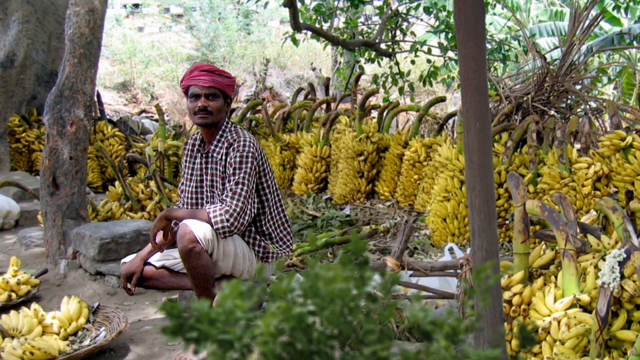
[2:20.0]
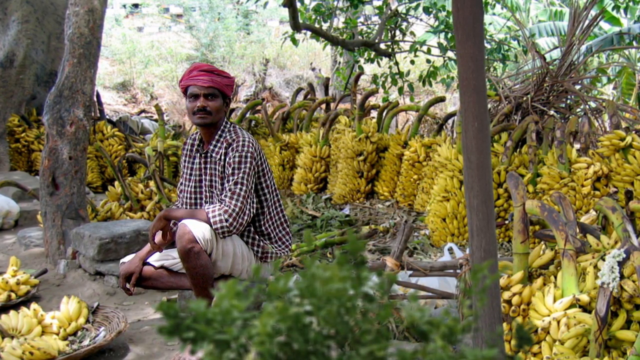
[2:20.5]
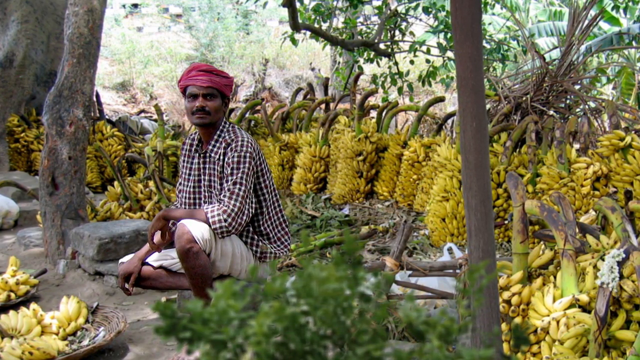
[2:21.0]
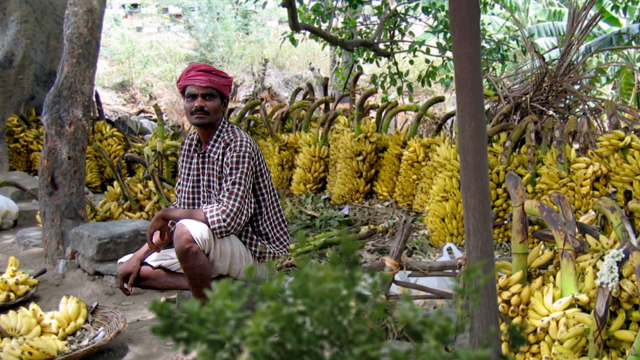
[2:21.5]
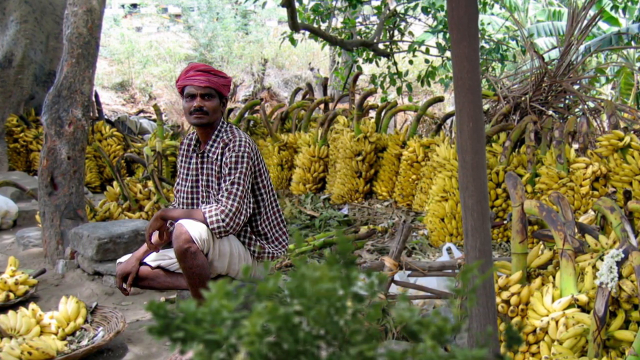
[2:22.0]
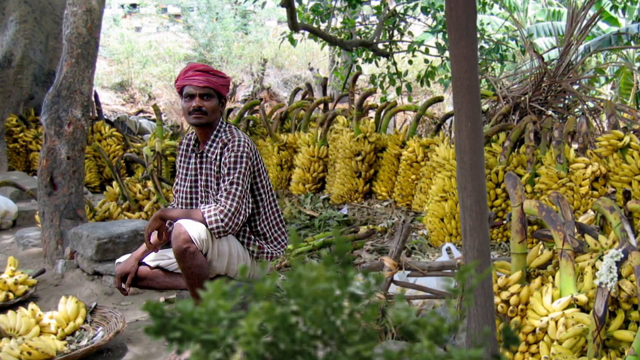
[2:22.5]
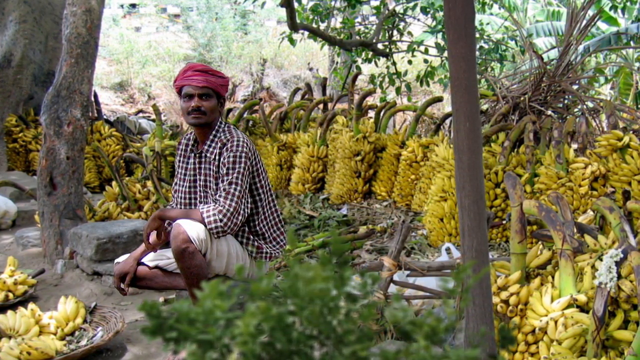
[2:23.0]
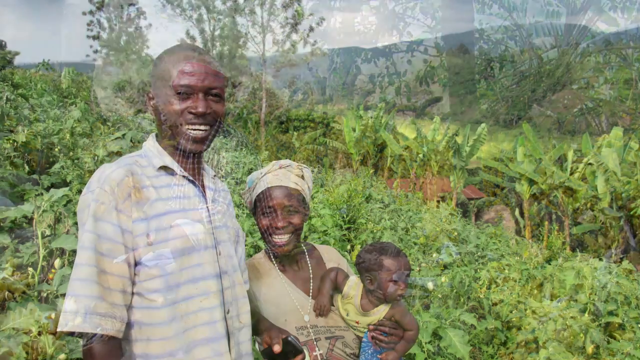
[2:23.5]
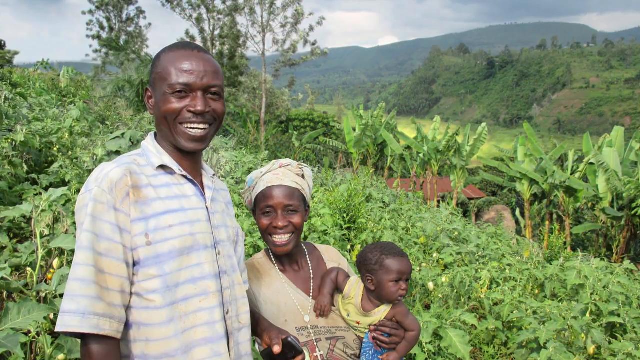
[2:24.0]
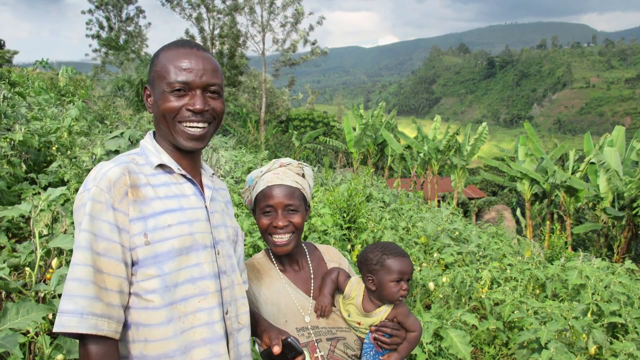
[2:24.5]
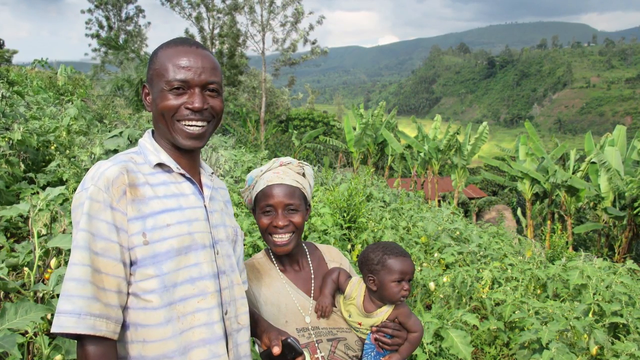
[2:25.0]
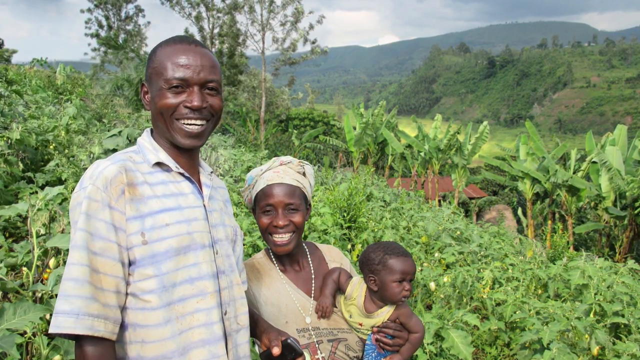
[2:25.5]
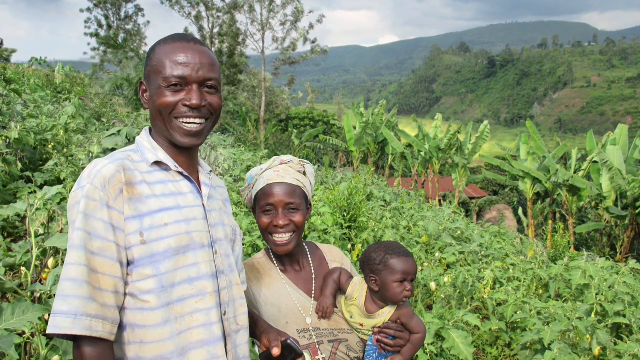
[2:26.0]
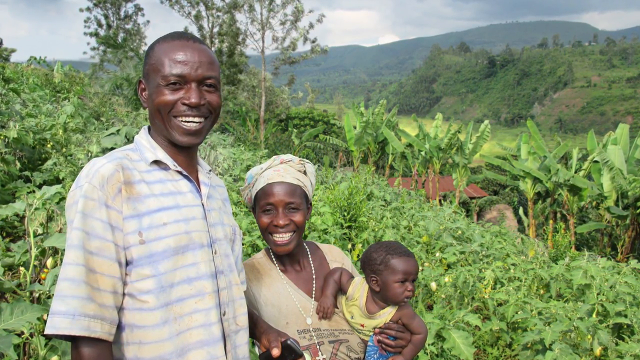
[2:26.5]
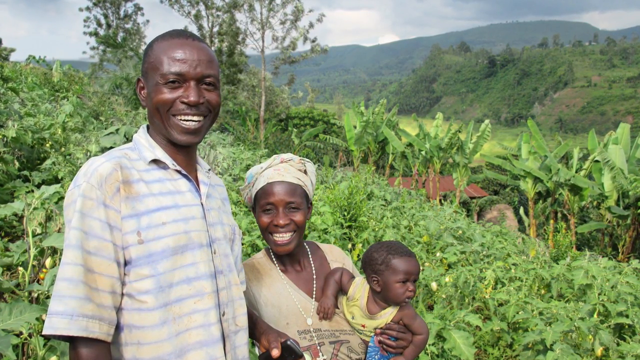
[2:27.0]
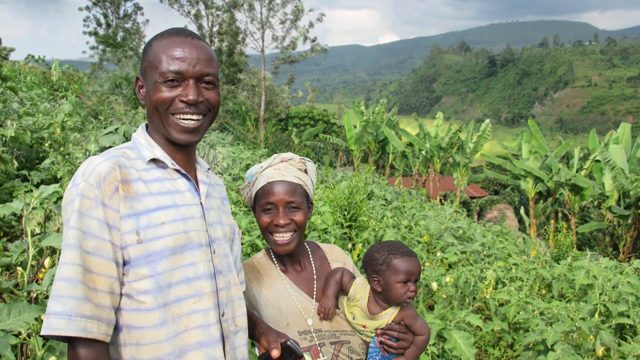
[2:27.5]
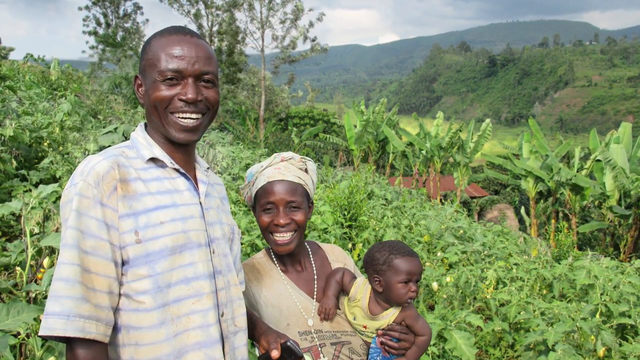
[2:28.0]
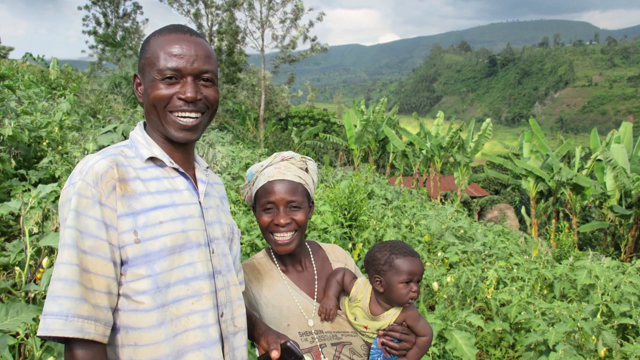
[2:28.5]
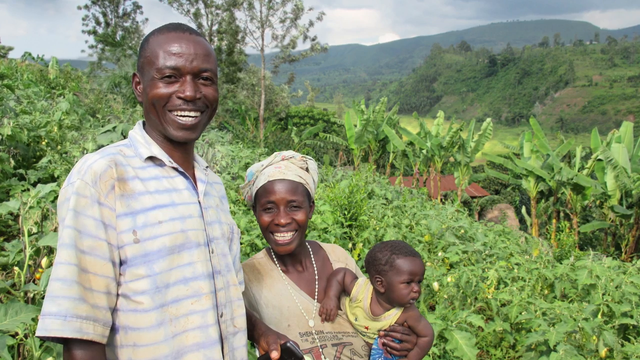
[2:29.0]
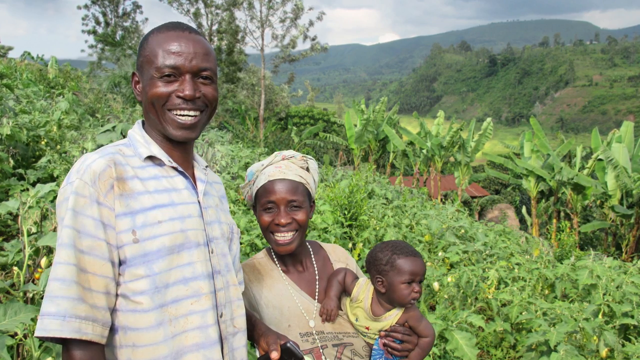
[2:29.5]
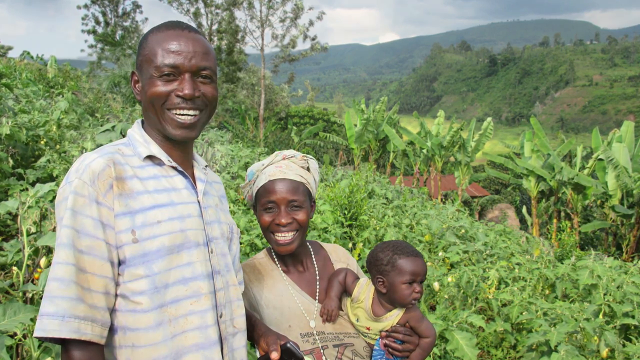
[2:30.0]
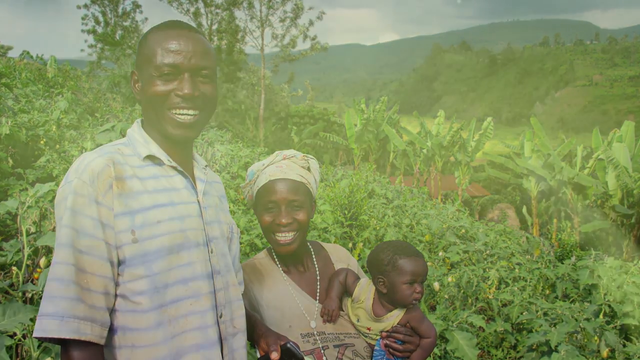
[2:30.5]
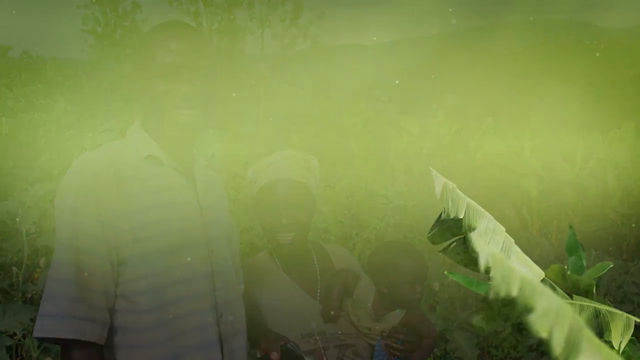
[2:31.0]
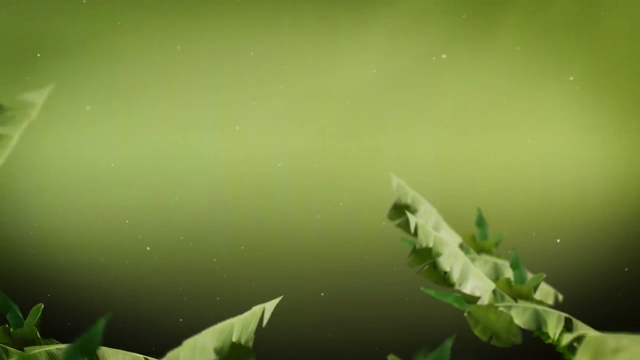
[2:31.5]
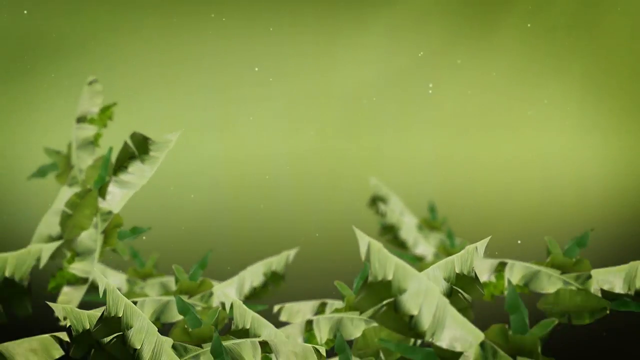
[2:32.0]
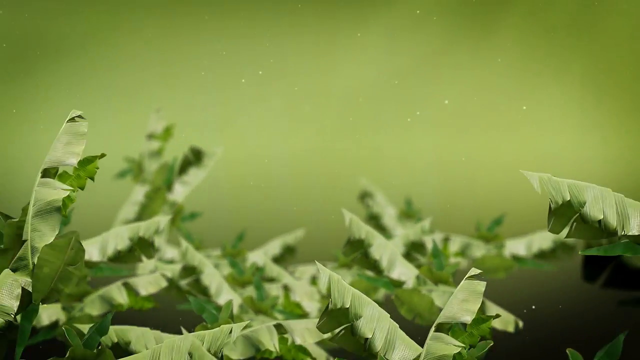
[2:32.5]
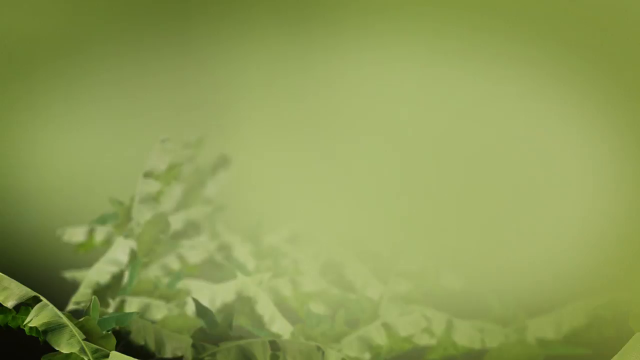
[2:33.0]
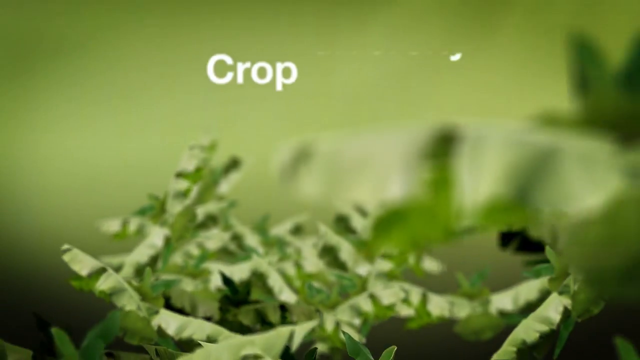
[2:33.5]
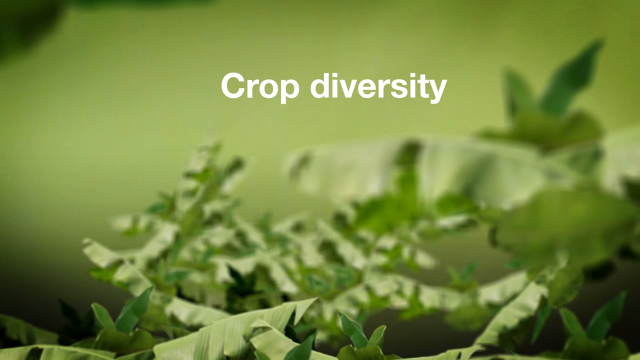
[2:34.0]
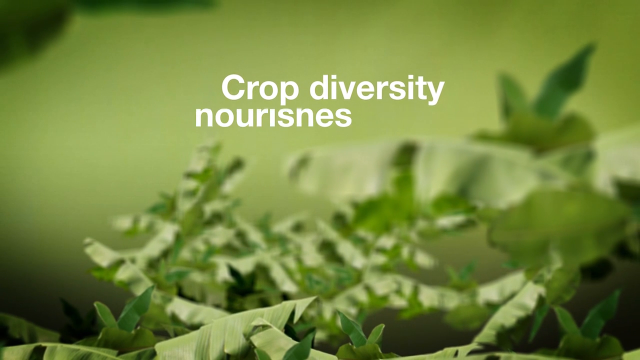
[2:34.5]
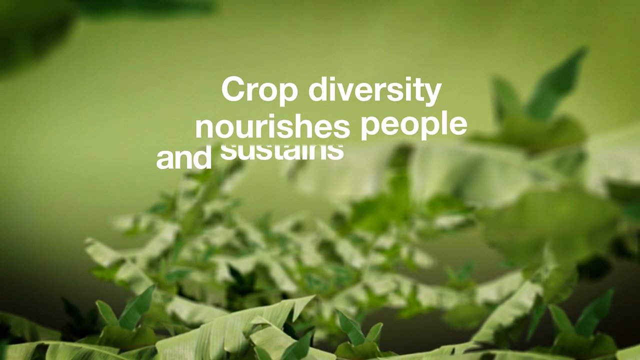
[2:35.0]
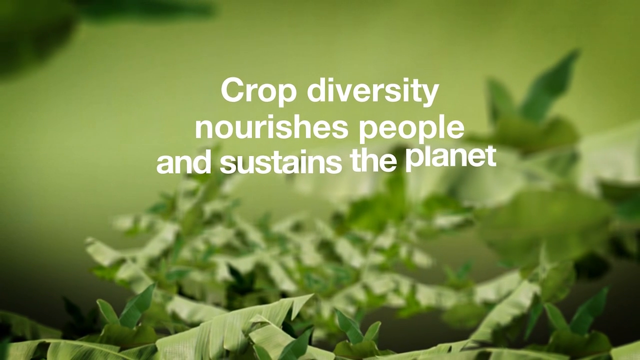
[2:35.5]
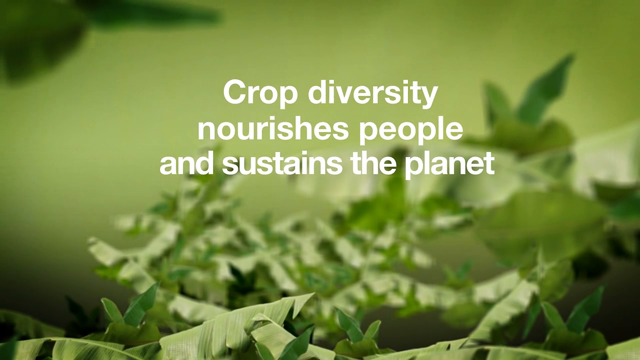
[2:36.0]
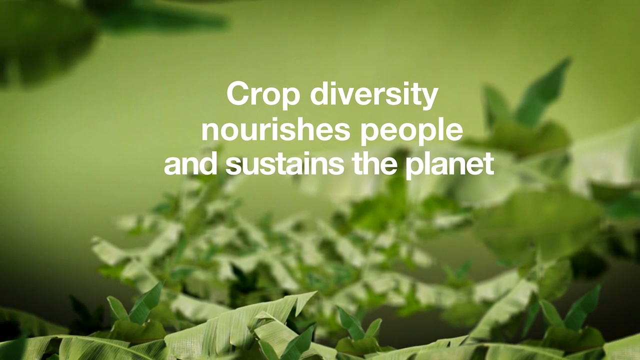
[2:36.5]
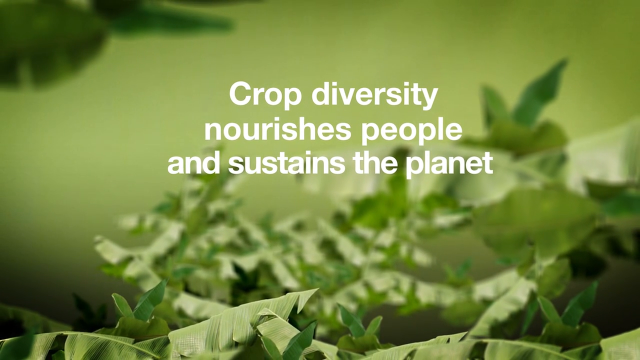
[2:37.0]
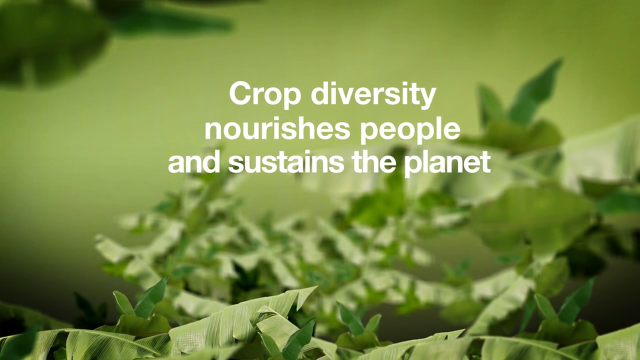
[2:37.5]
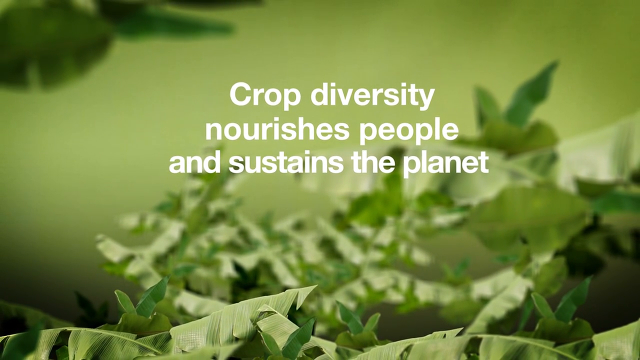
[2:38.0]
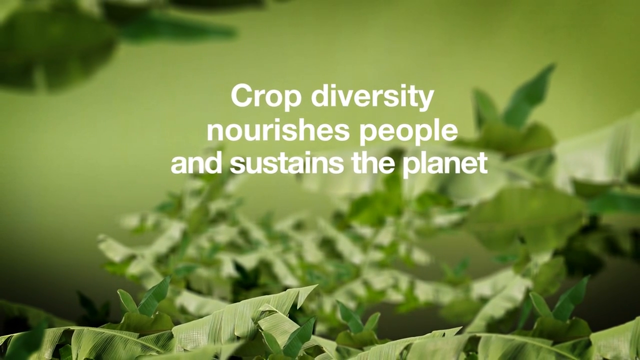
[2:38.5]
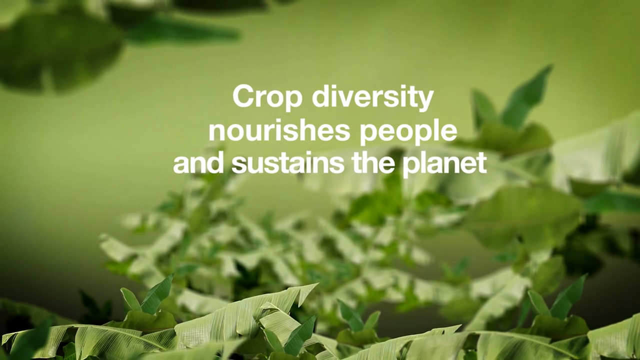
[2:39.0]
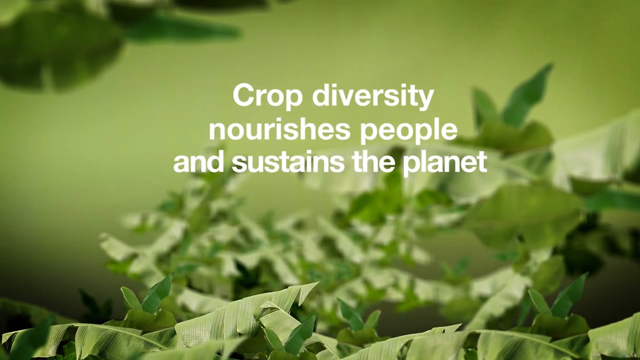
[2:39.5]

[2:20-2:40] The man kneeling close to the ground in front of the bananas is shown for a few seconds; he wears a long-sleeve checkered shirt with the sleeves pulled up about a quarter of the way and a red scarf wrapped around his head. Next comes a photograph of a family, a man, a woman and a baby who appear to be African American, standing in front of a field. The woman holds the baby and wears a head wrap covering her hair. Then moving leaves fill the screen, and the text "crop diversity nourishes people and sustains the planet" appears in white lettering against the green leaves.